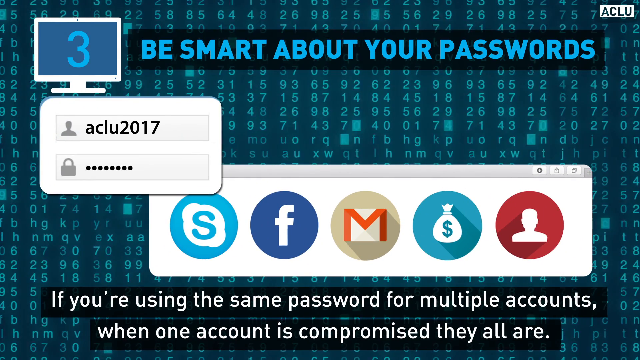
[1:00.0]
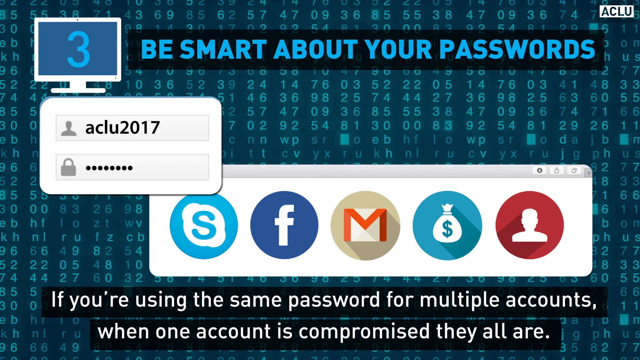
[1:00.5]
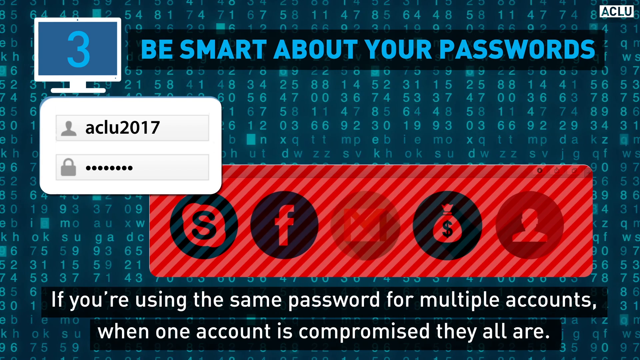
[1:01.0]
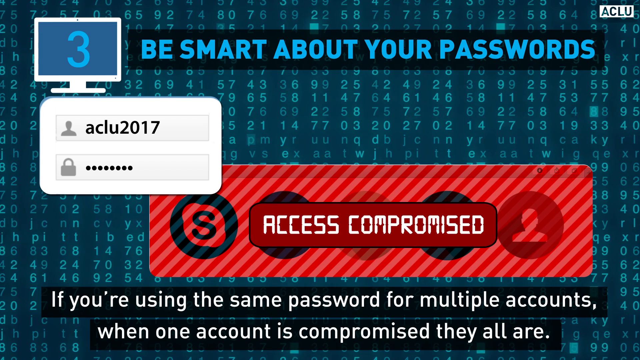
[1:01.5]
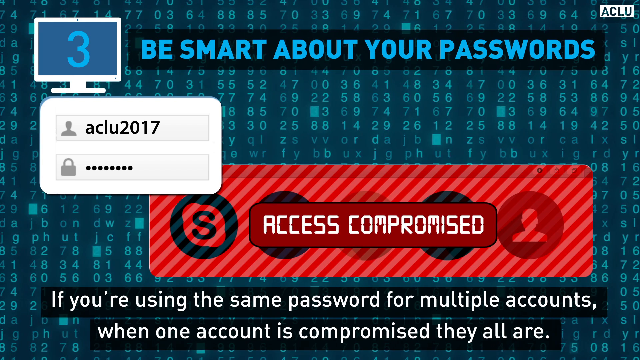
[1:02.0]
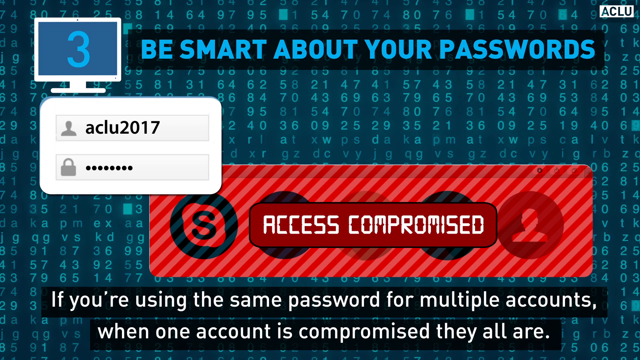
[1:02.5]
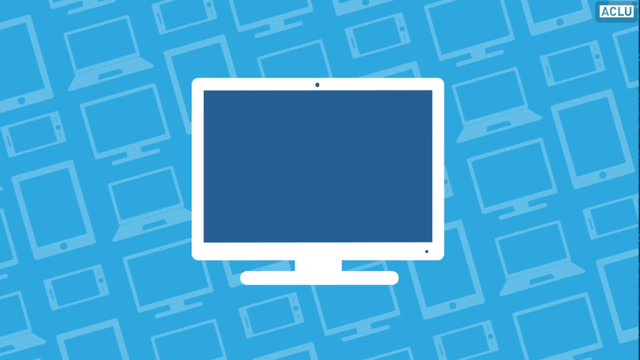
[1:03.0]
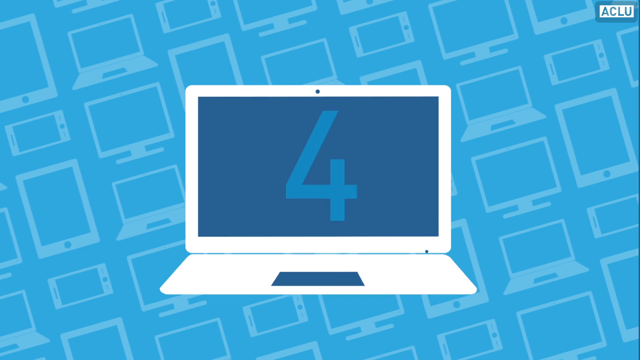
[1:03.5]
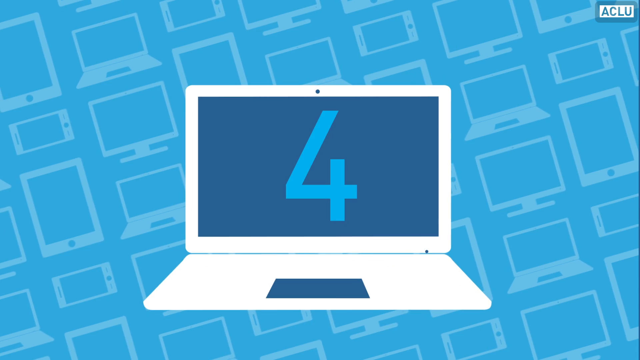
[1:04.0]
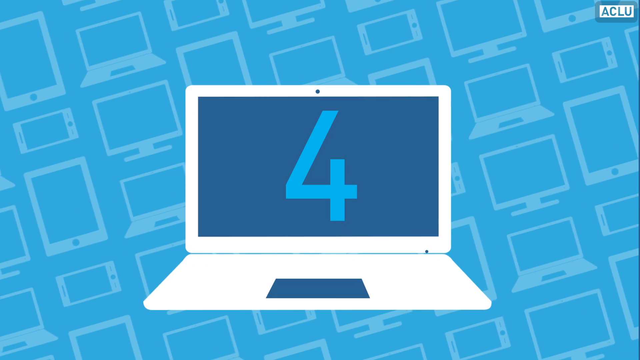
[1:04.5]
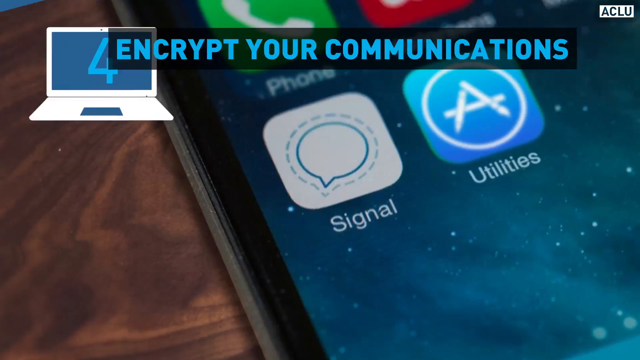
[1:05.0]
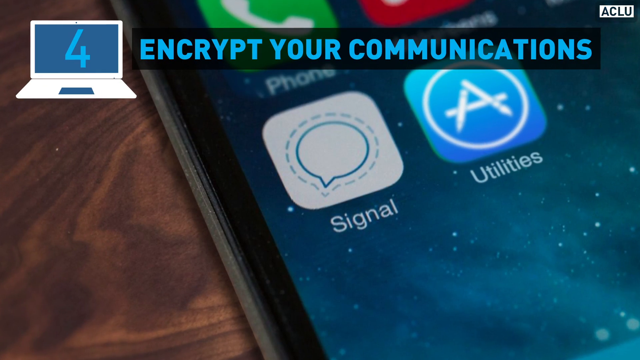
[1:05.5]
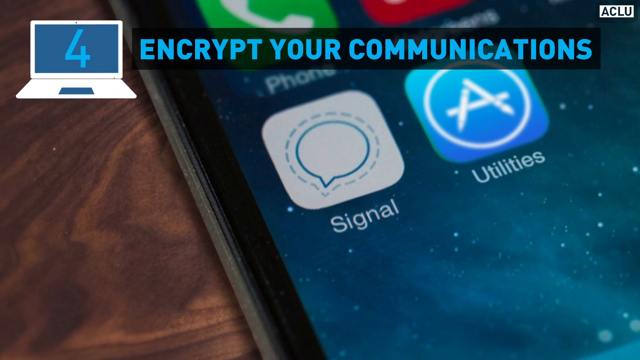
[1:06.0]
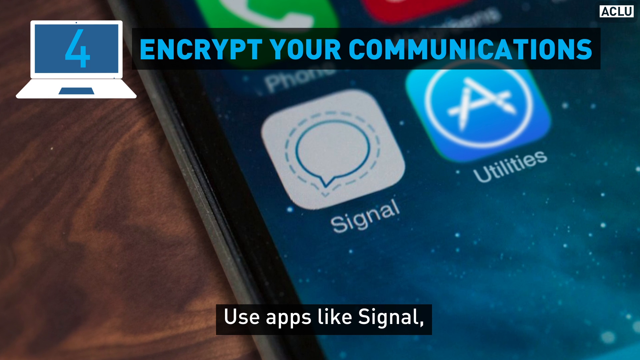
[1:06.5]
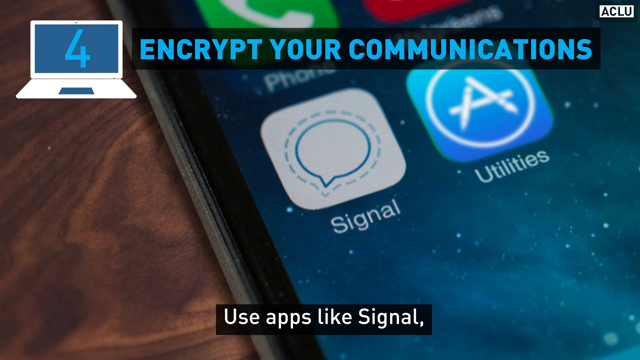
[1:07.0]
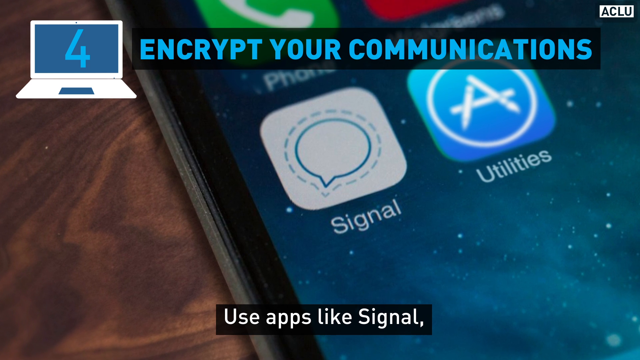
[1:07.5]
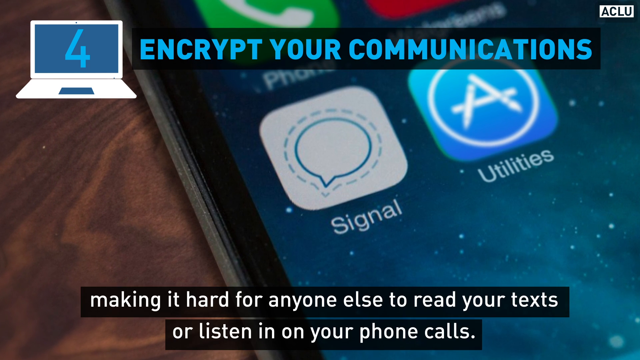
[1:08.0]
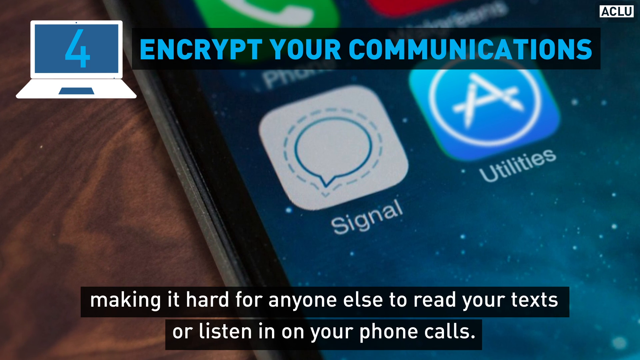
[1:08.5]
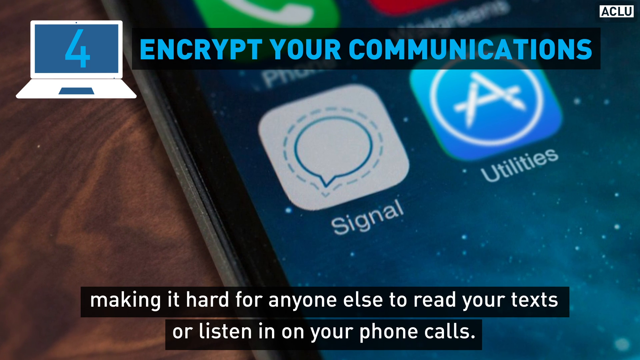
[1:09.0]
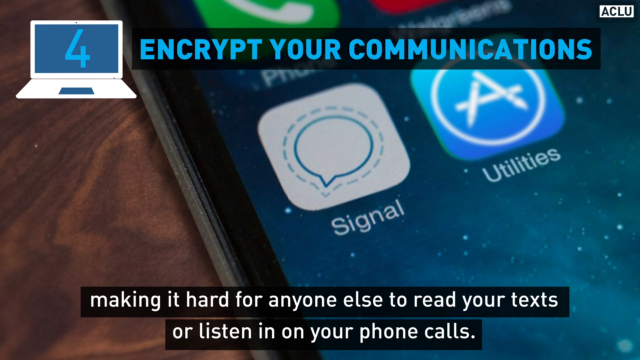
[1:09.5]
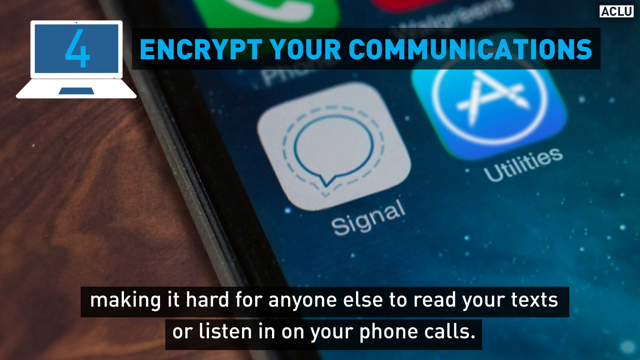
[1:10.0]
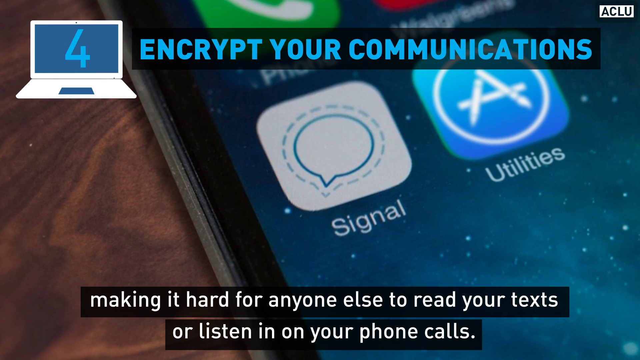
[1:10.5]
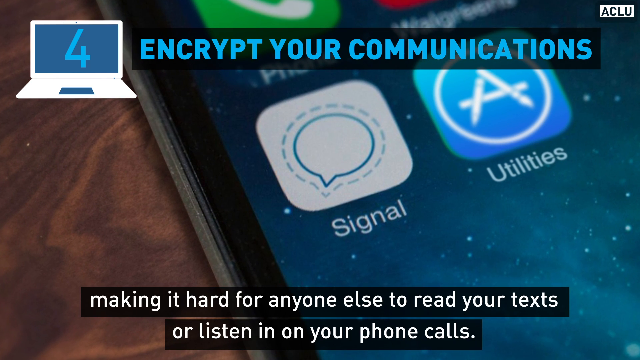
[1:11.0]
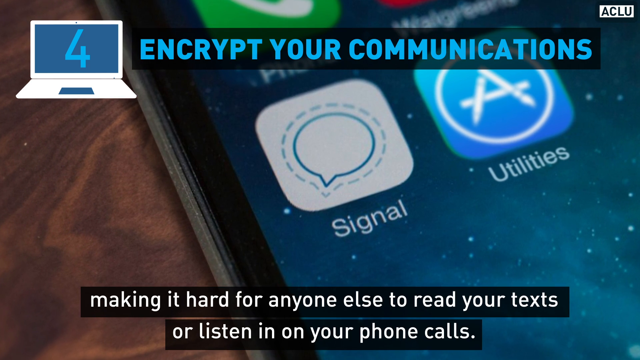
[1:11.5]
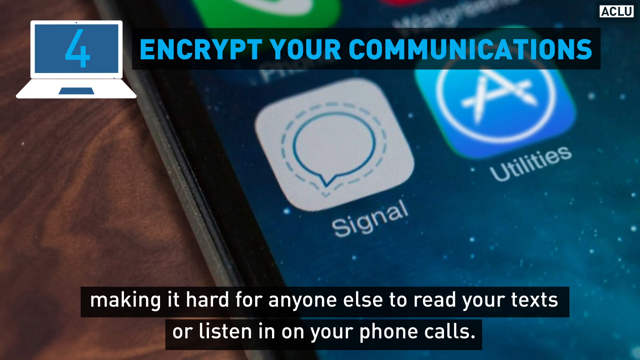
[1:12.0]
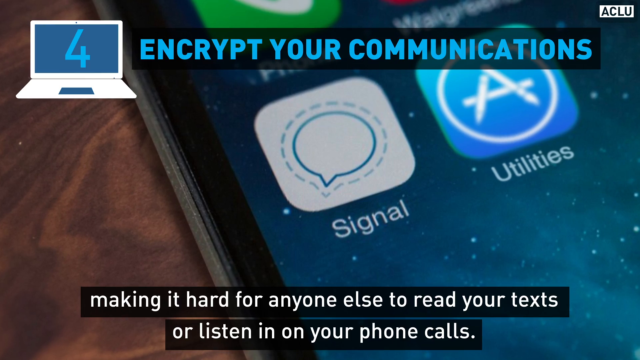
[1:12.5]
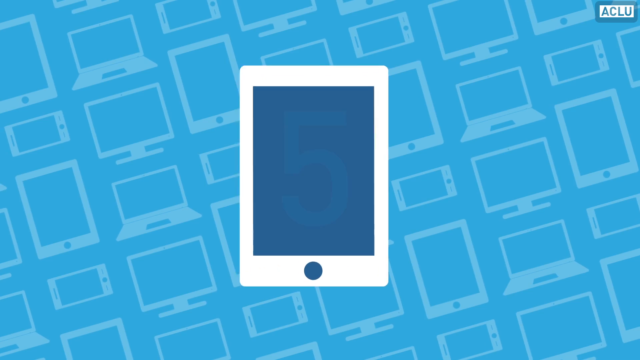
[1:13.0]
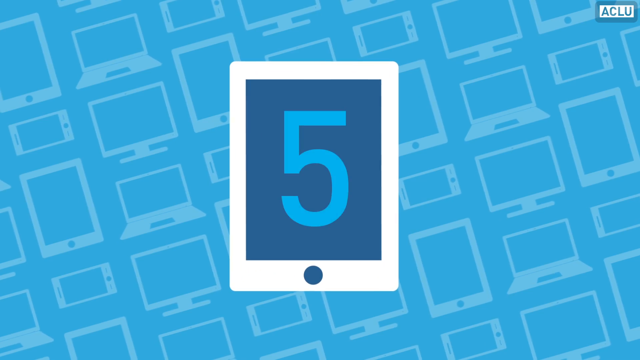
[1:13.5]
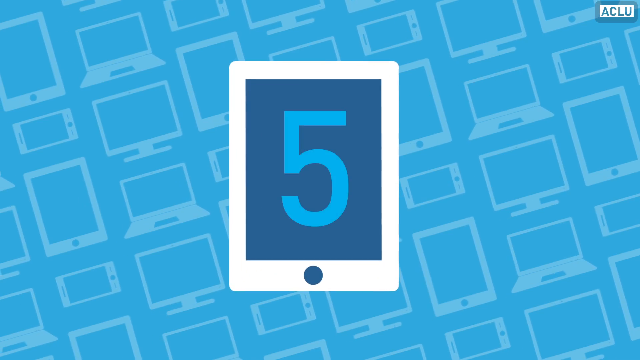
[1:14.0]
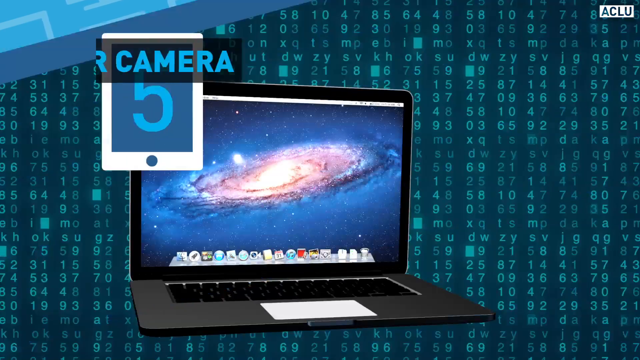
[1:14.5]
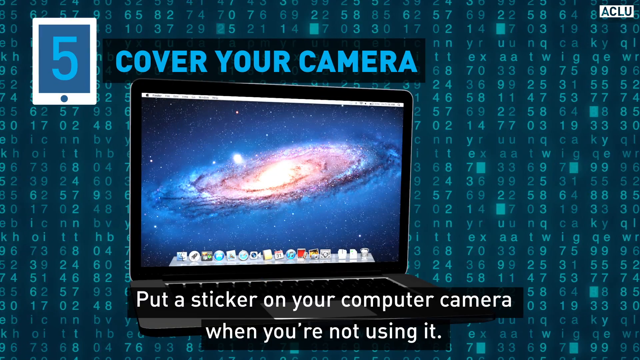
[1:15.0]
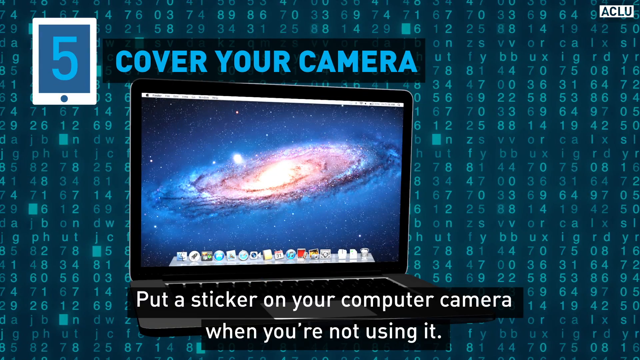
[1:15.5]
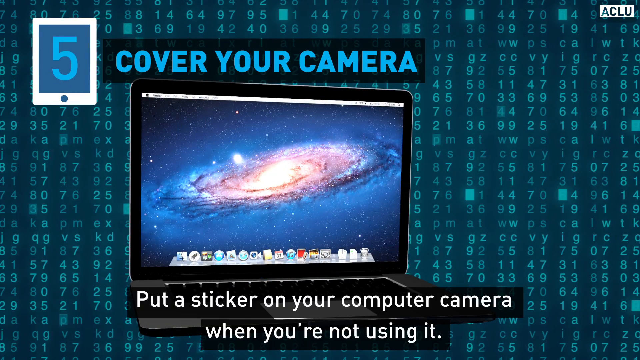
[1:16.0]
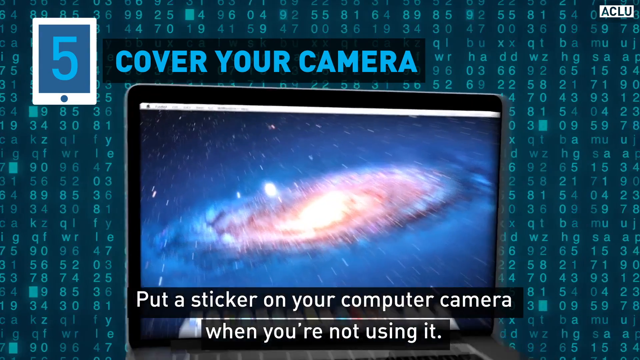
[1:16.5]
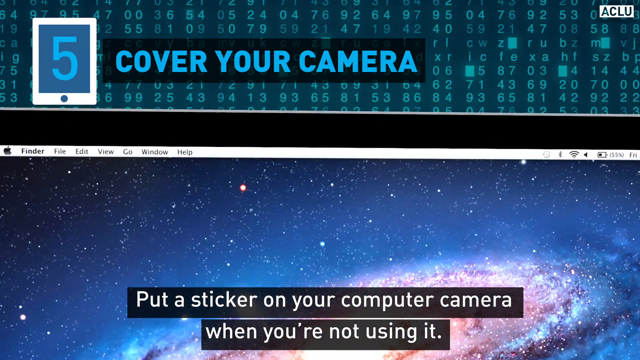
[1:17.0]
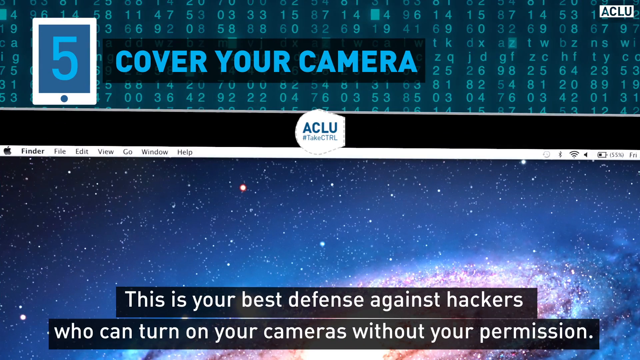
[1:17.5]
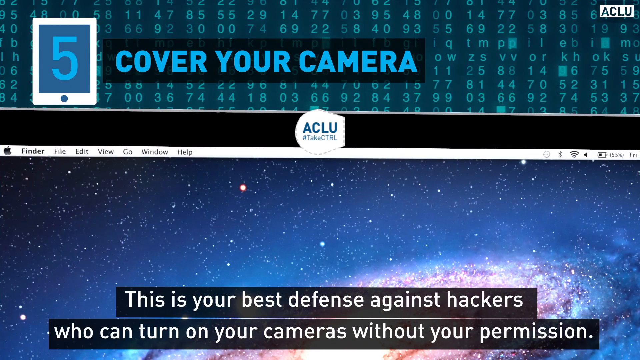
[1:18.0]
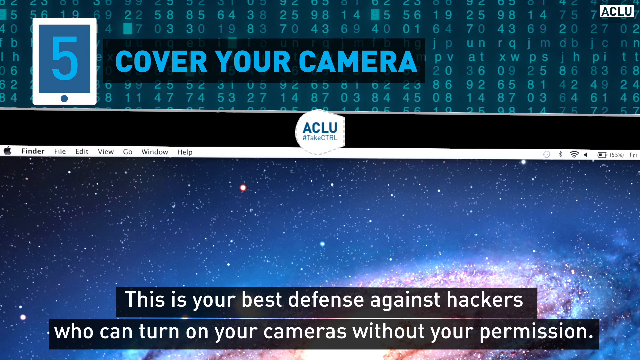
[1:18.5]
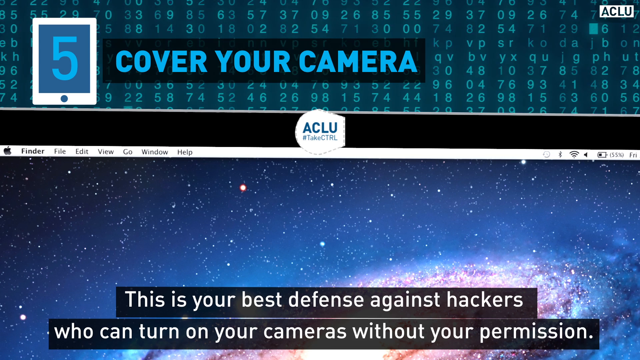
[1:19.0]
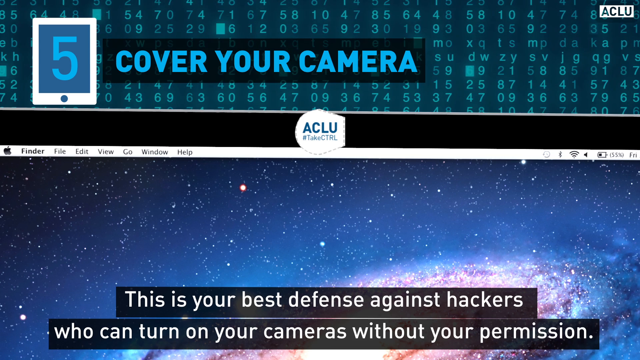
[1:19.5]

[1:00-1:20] A graphic shows that when the same password is used for multiple accounts and one account is compromised, they are all compromised. When the same password is used for two or three accounts, it shows "access compromised" and turns red. Step number four reads "encrypt your communications use apps like Signal making it hard for anyone else to read your text or listen in on your phone calls." The Signal app then appears on a mobile phone. This time it is not a digital animation but a real photograph of a phone with Signal as one of its apps. Step number five reads "cover your camera," with advice to put a sticker on the computer camera when it is not in use.